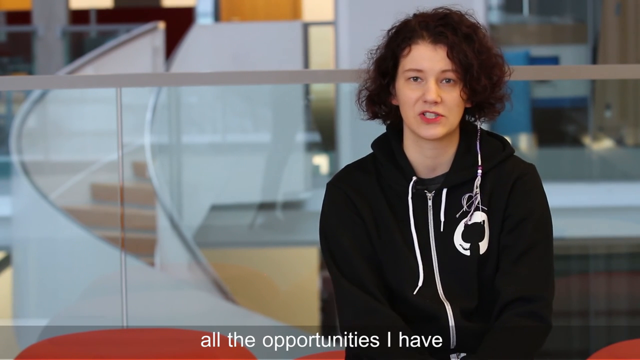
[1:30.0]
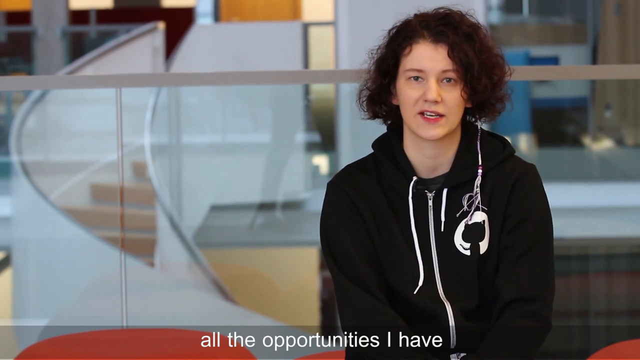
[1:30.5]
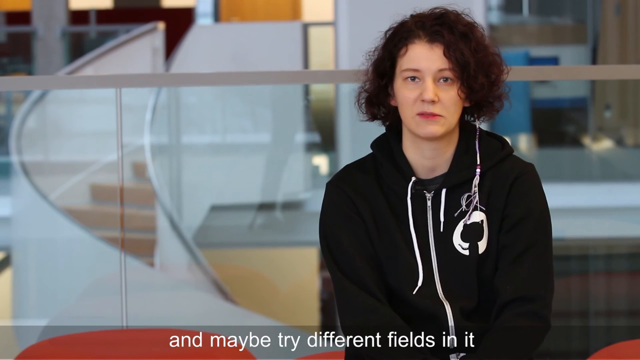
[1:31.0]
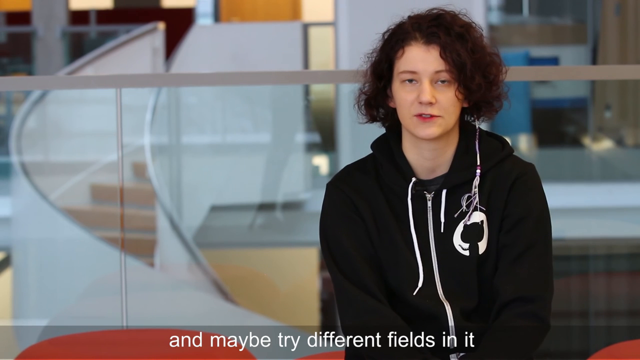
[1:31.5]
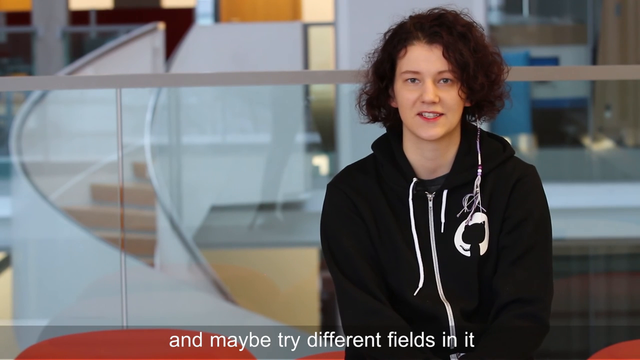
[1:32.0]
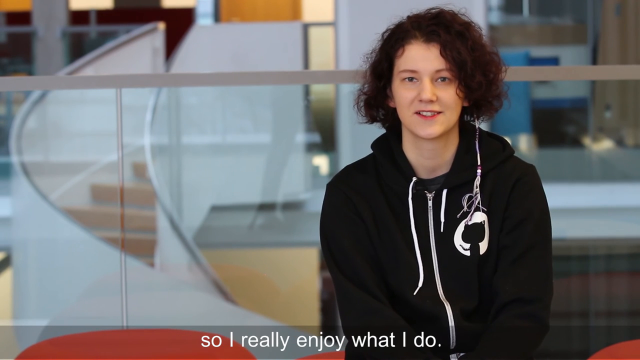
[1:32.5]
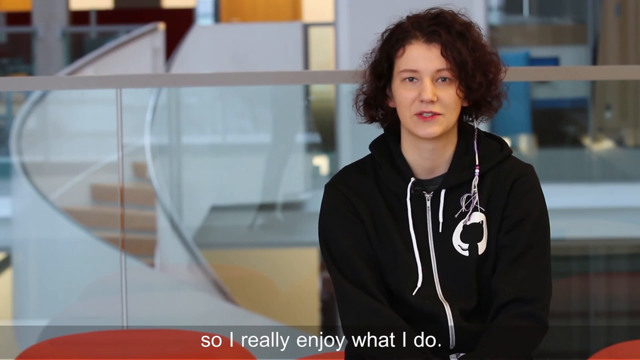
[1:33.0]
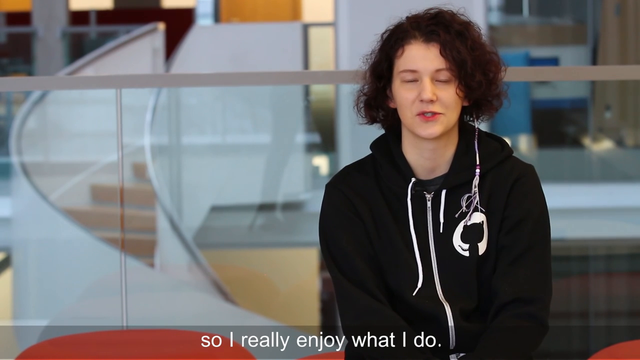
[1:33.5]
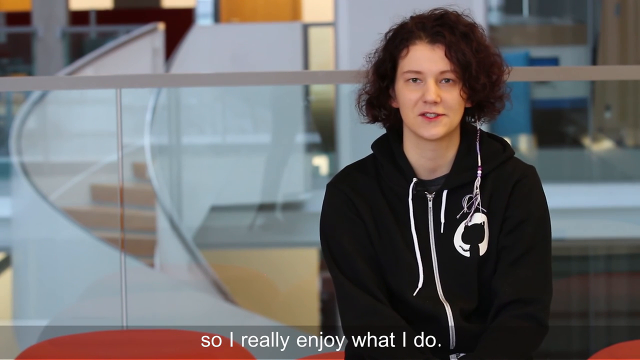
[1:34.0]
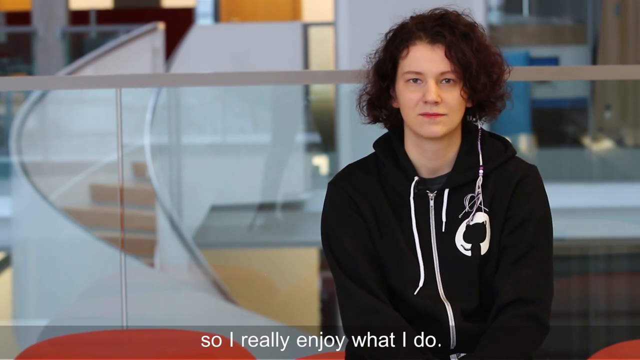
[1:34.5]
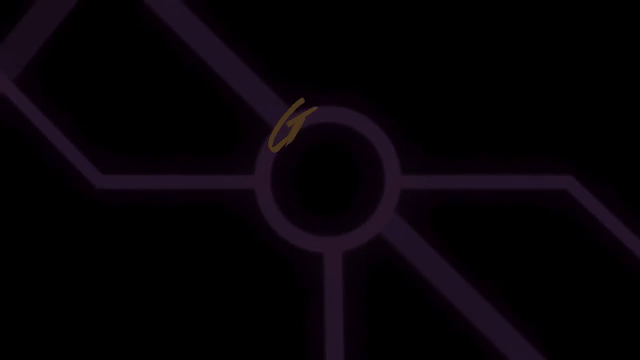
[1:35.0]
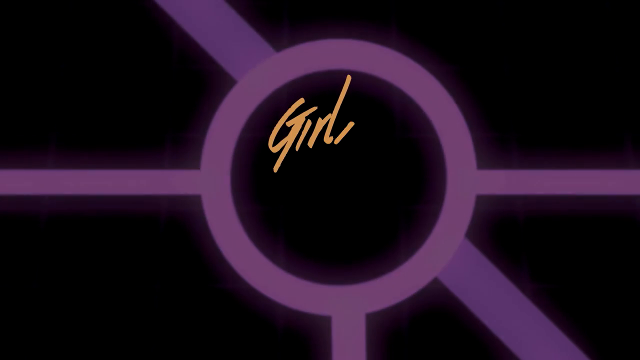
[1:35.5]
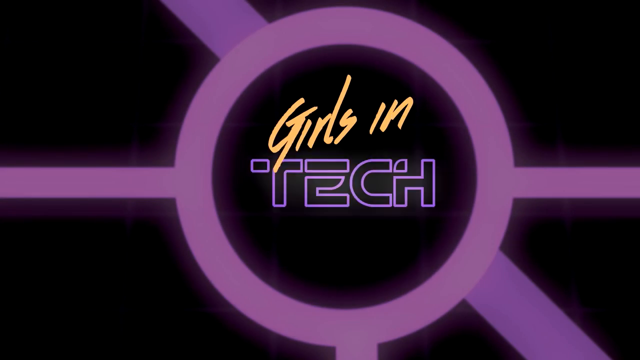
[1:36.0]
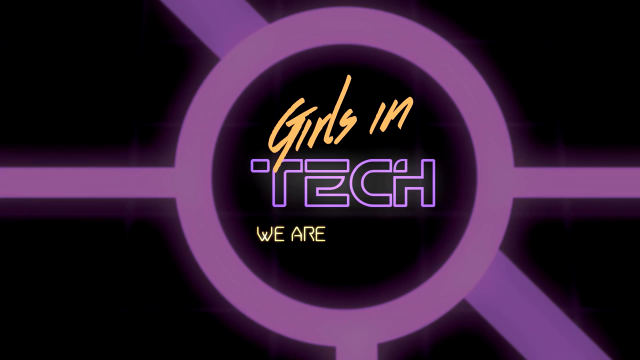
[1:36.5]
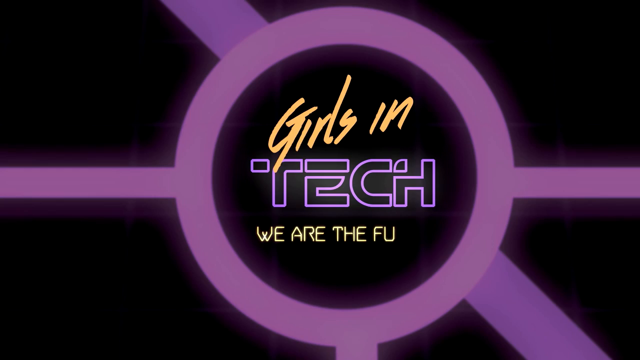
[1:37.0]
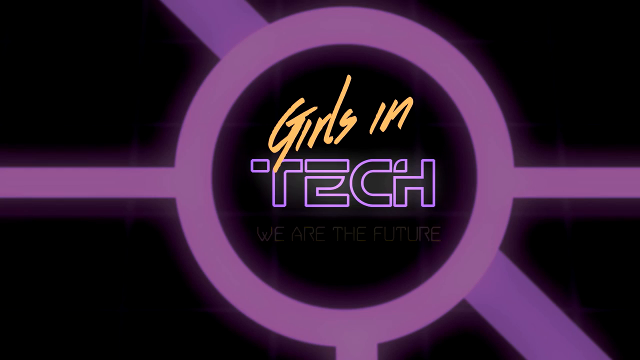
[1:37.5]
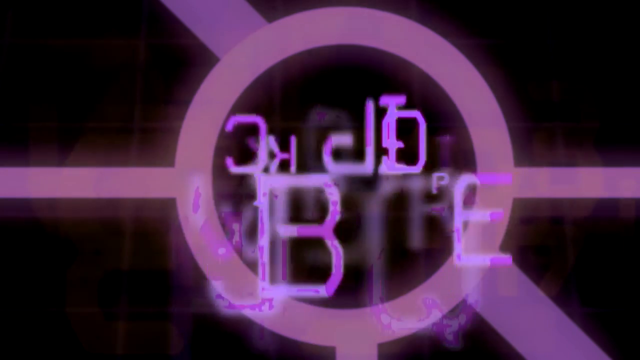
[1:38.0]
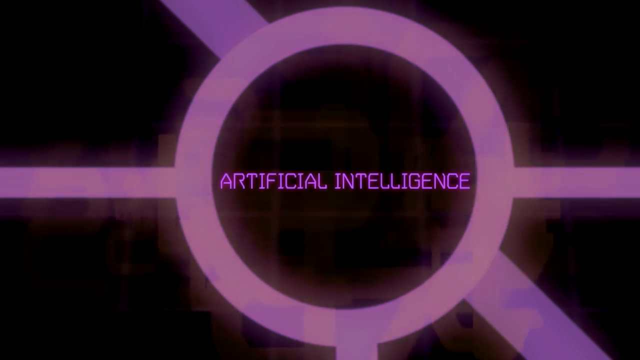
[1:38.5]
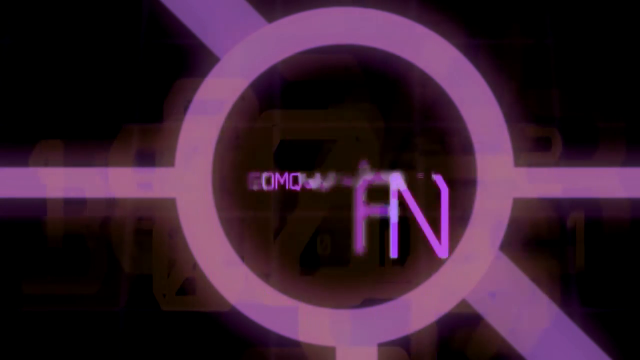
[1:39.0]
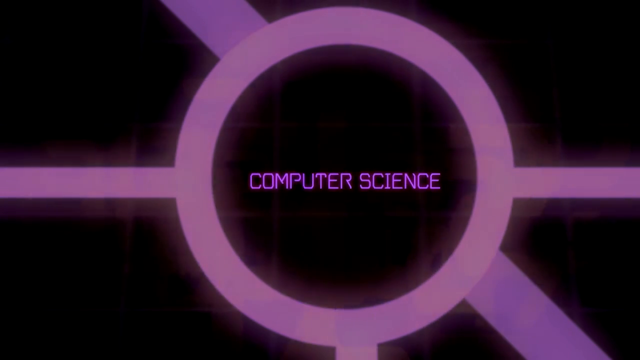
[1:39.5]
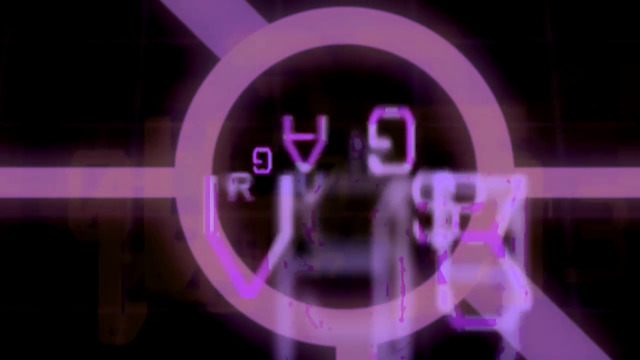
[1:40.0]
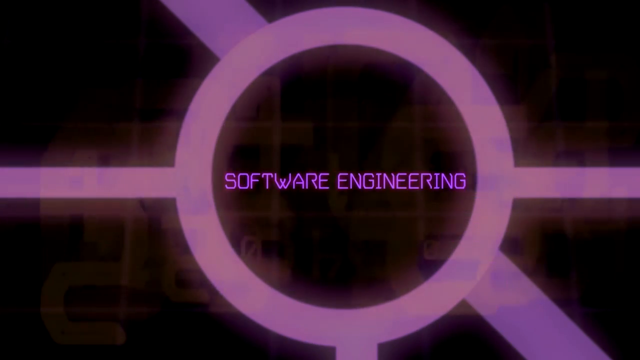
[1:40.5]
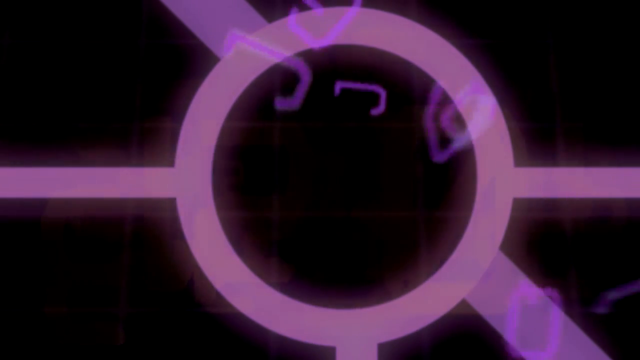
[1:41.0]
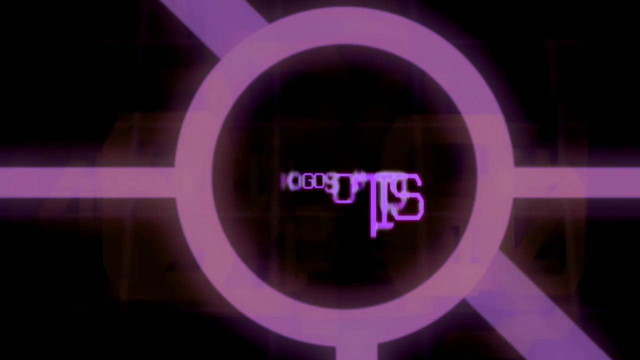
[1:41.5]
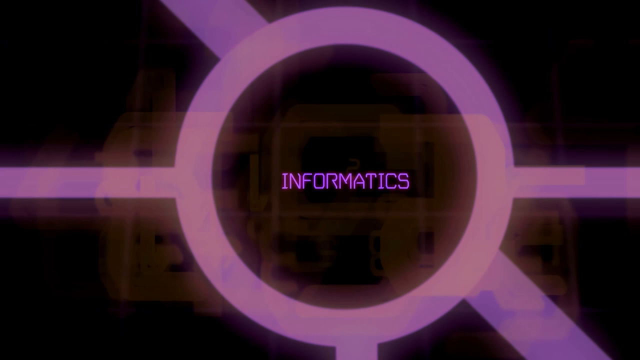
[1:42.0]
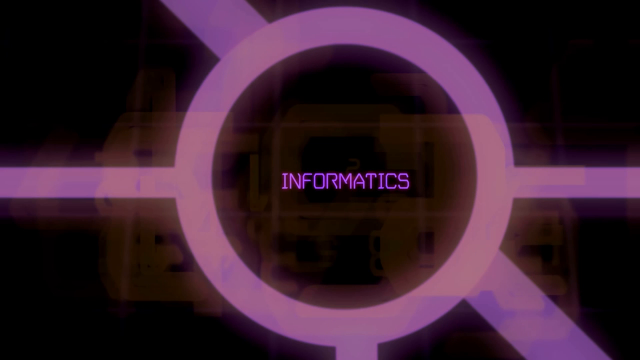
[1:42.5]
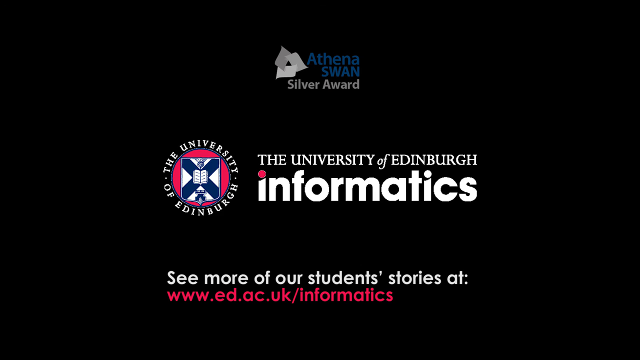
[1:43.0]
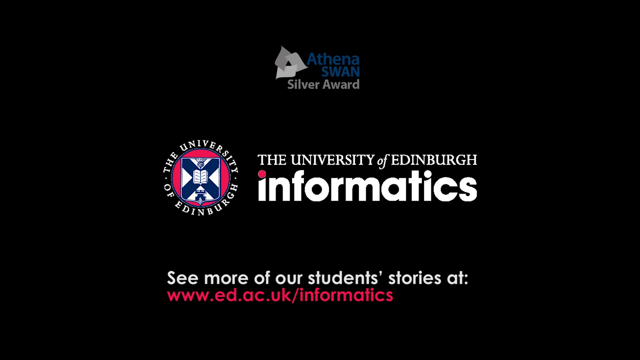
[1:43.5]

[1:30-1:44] A young girl with short brown hair wears a black hoodie jacket with a white logo that has a black kitty cat in the center. The hoodie looks fairly new. Behind her is a clear, see-through white glass window with a white transparent windy staircase behind it with silver handrails. Text at the bottom reads "all the opportunities I have and maybe try different fields in it so I really enjoy what I do." The video transitions to a screen of purple lights with yellow text reading "girls in tech we are the future artificial intelligence computer science software engineering informatics," and then to a black screen with blue and silver text reading "athena swan silver award." Next, a small circular University of Edinburgh logo appears on the left with text reading "the university of edinburgh informatics" on the right, along with white and red text reading "see more of our students stories at www.ed.ac.uk/informatics."